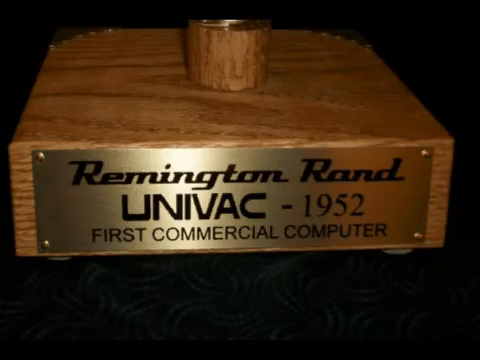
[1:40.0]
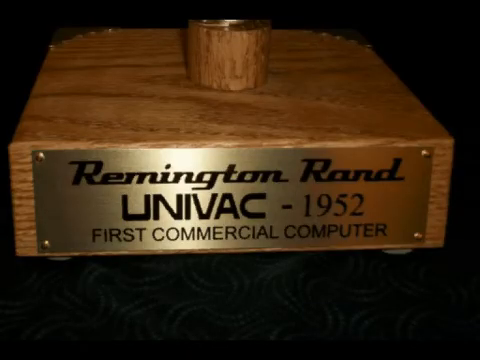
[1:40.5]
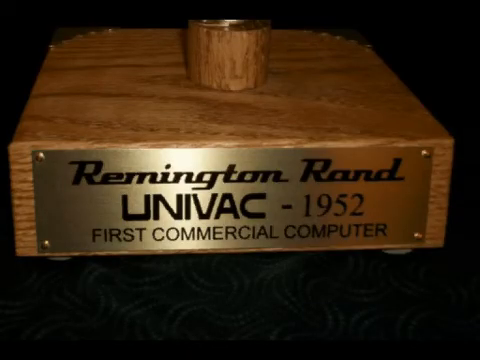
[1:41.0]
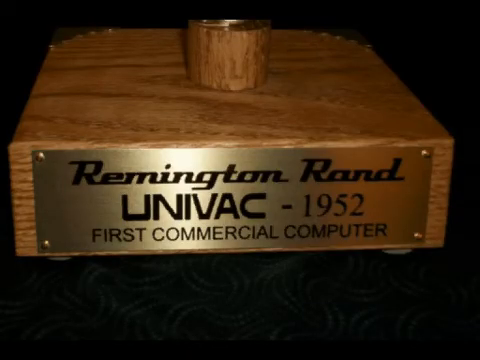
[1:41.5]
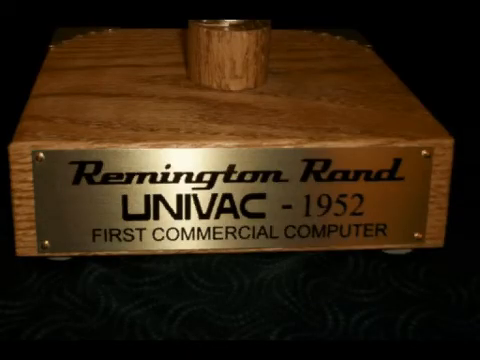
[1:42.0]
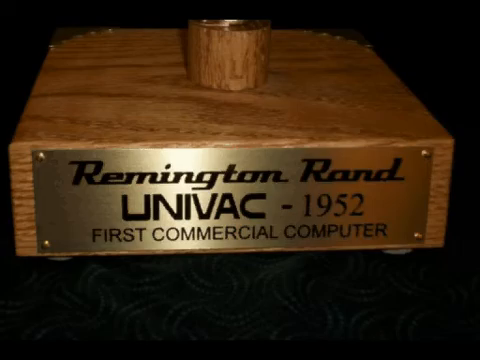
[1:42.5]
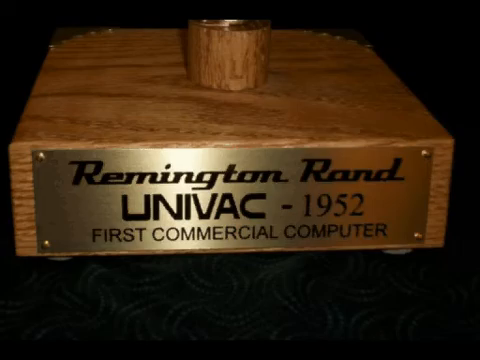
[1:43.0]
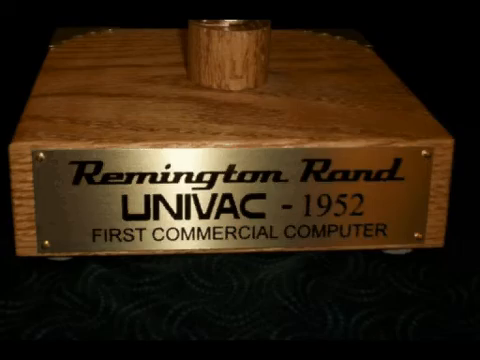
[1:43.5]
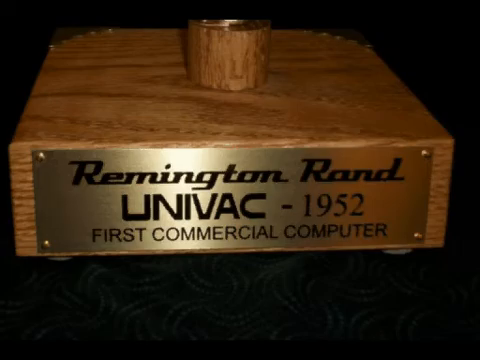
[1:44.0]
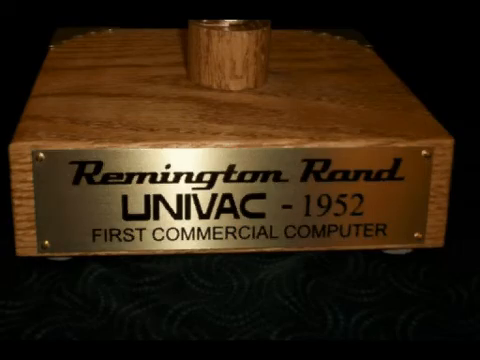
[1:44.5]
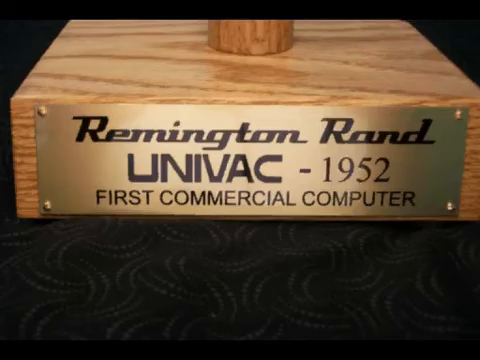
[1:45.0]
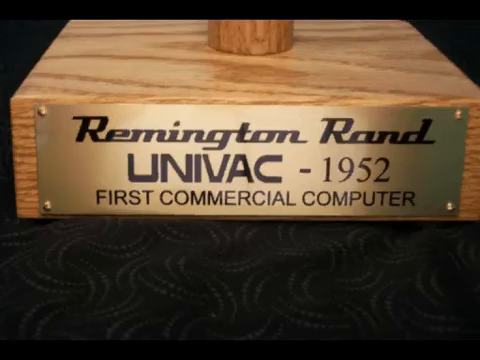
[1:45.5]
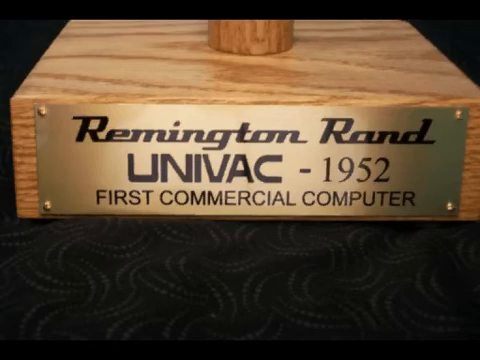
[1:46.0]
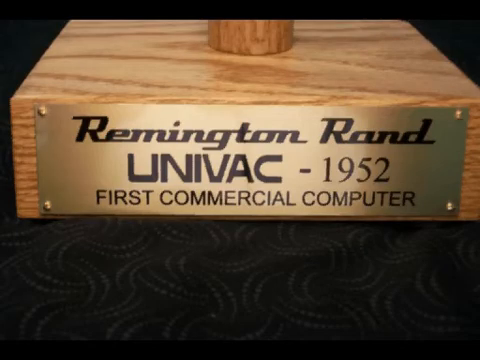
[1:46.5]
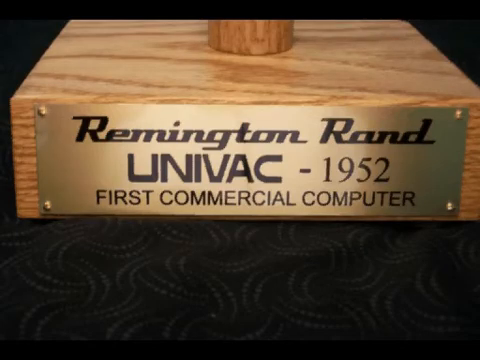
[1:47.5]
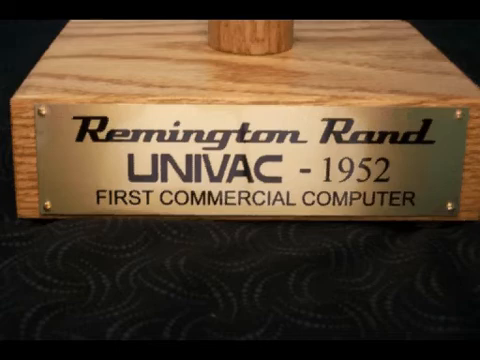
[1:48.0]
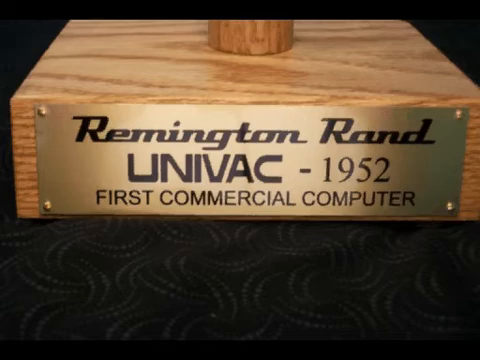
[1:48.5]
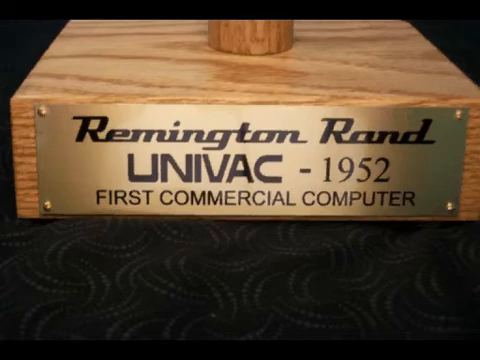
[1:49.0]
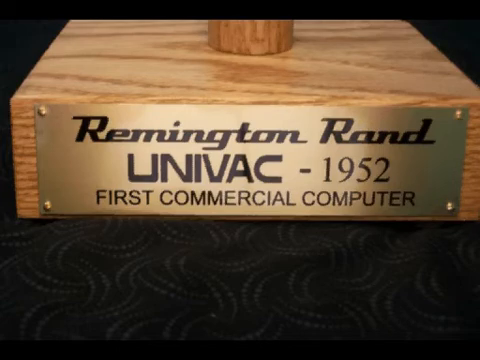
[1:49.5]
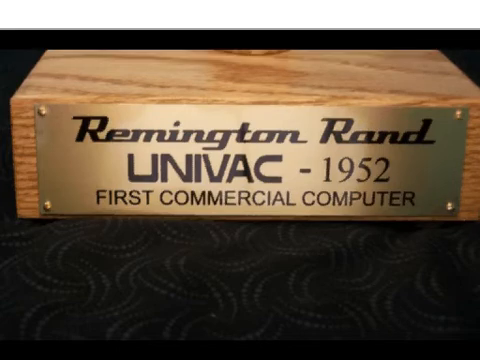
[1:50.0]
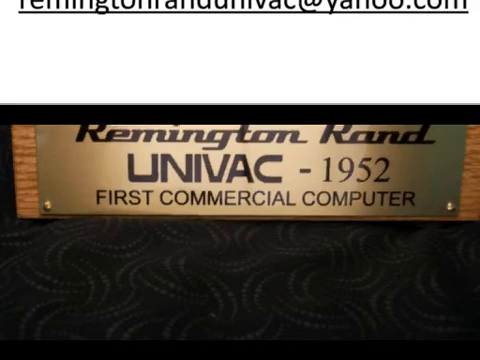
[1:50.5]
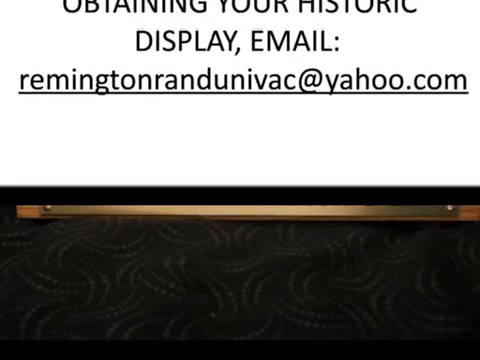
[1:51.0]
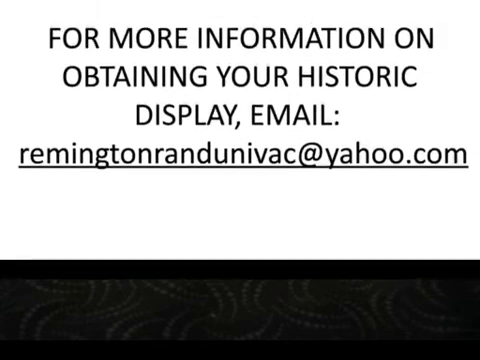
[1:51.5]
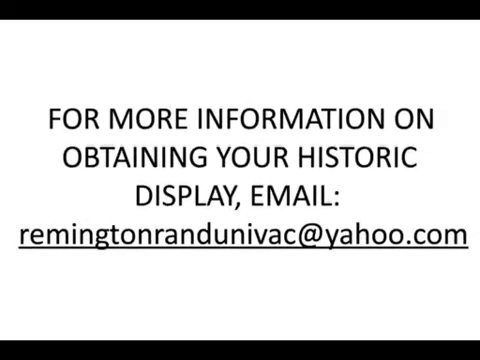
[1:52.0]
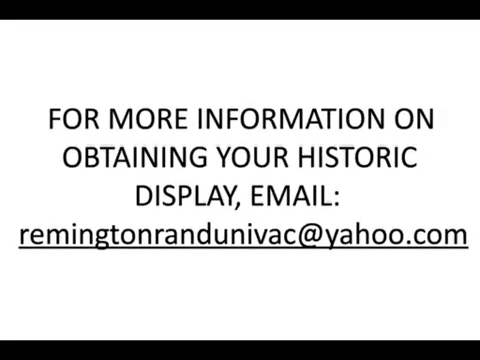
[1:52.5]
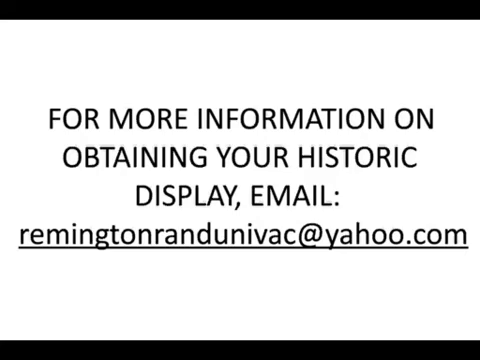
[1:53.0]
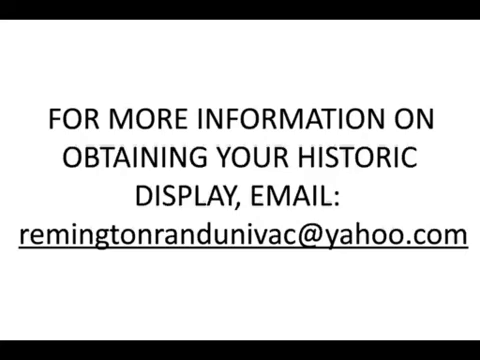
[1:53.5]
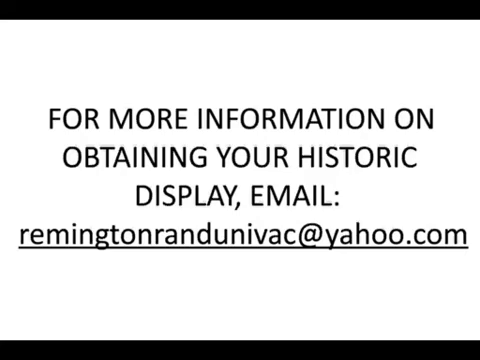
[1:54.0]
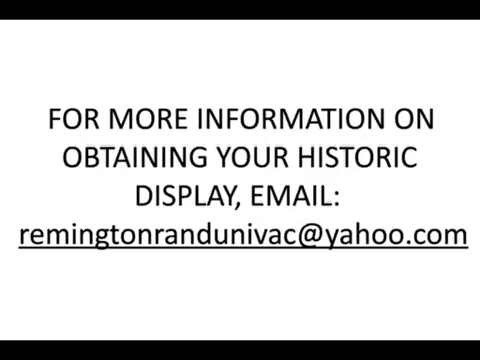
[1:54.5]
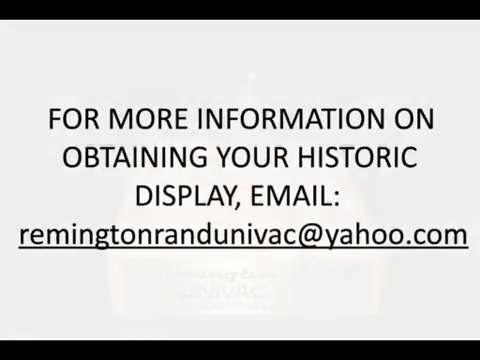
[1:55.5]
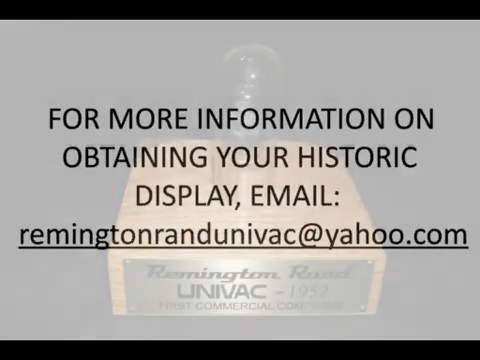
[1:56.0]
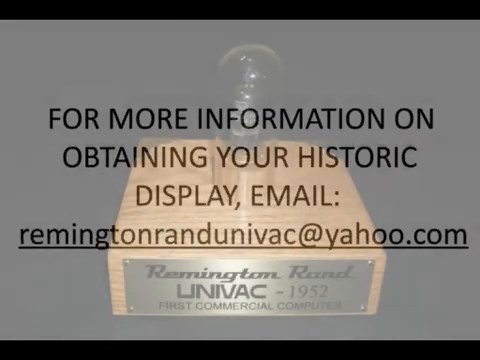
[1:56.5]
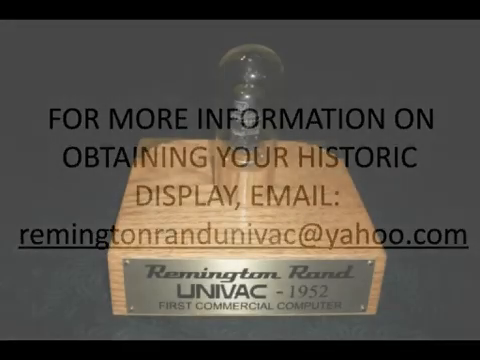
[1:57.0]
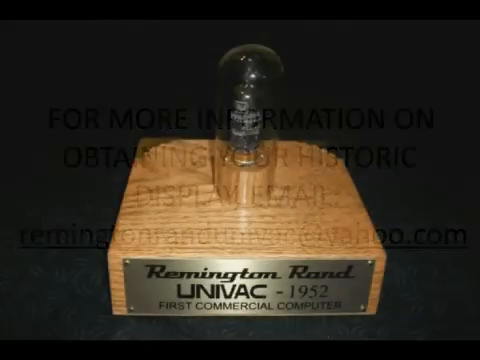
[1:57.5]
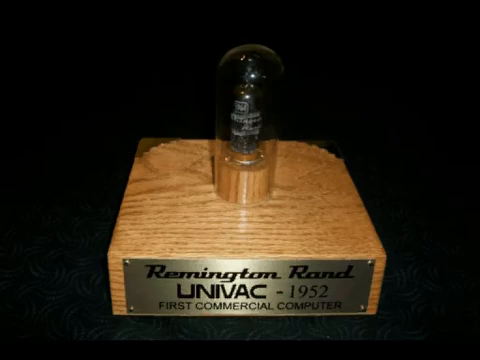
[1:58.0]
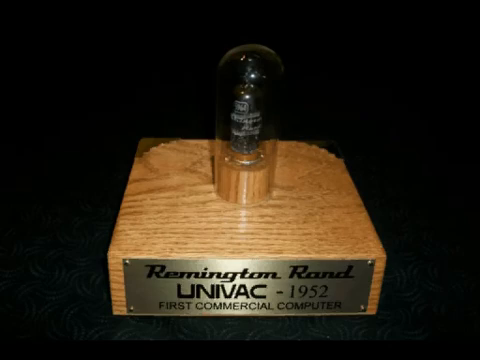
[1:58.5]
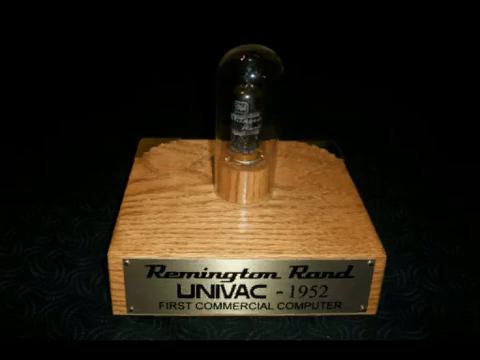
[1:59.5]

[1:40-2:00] A stained and lacquered block of wood shows the grain patterns of the wood. On its front is a brass nameplate with three lines of text: the top row reads "Remington Rand" in cursive, the middle row reads "UNIVAC-1952", and the third row reads "First Commercial Computer" in all caps. The plate has a screw in each corner attaching it to the front of the block. A light in front shines onto it to illuminate it. Partway through, a white slide drops down from the top with four rows of text in all caps, in black font against the white background: "For more information on obtaining your historic display, email remingtonrandunivac@yahoo.com". The email address is underlined.